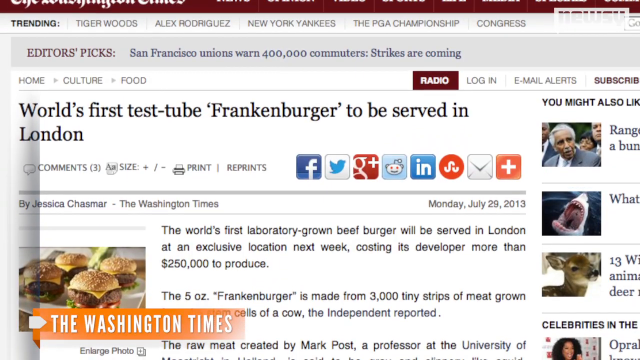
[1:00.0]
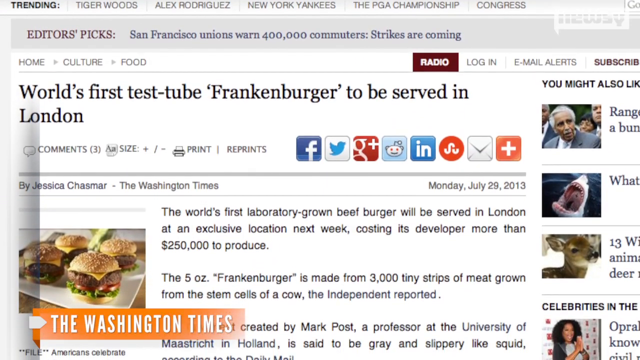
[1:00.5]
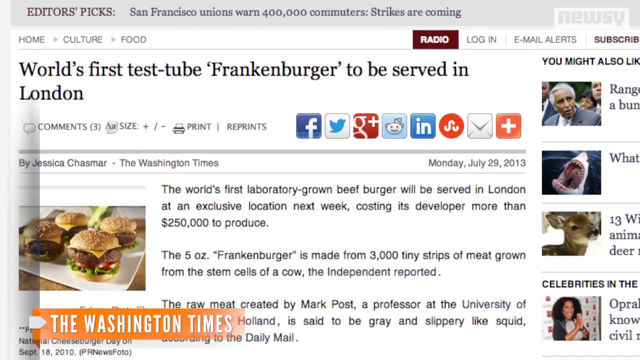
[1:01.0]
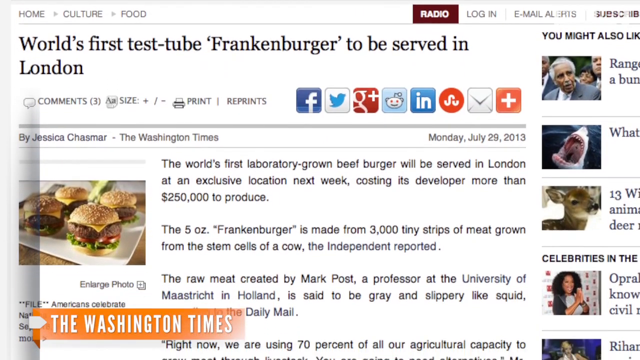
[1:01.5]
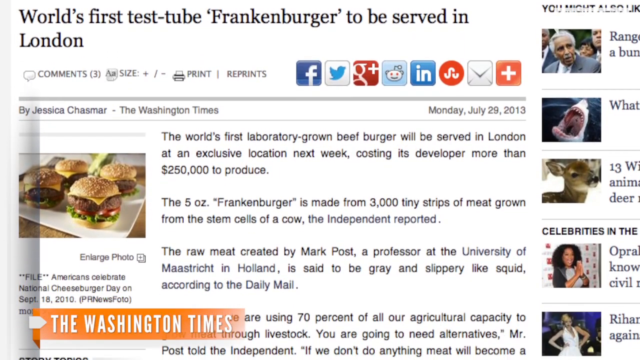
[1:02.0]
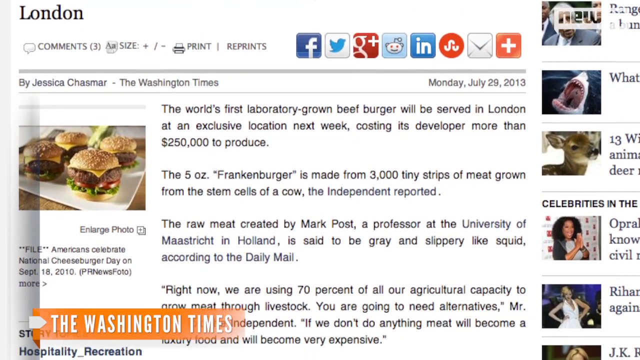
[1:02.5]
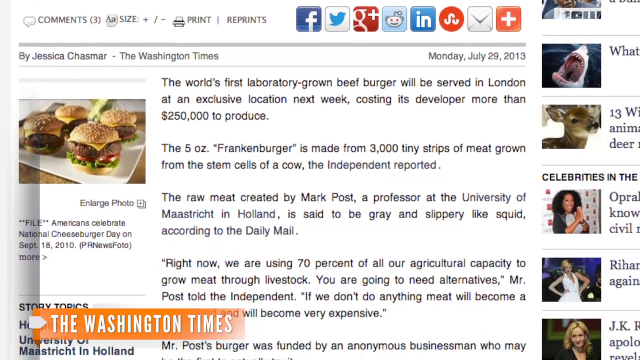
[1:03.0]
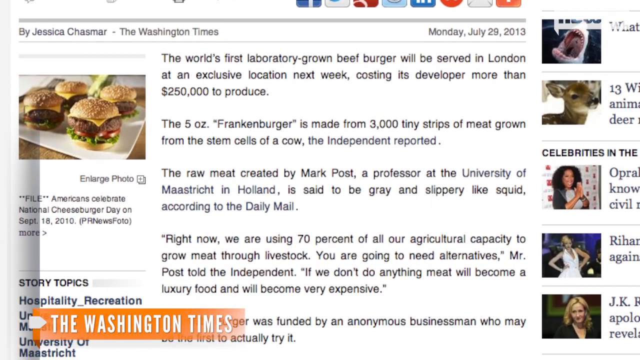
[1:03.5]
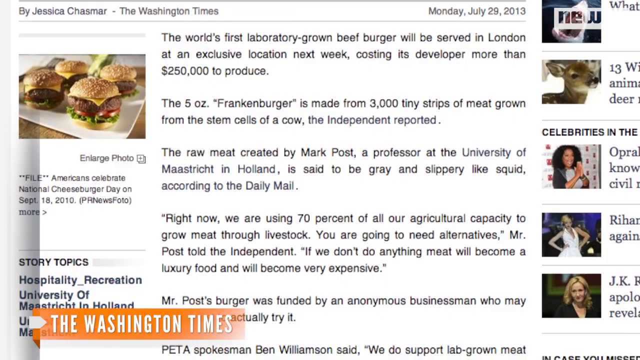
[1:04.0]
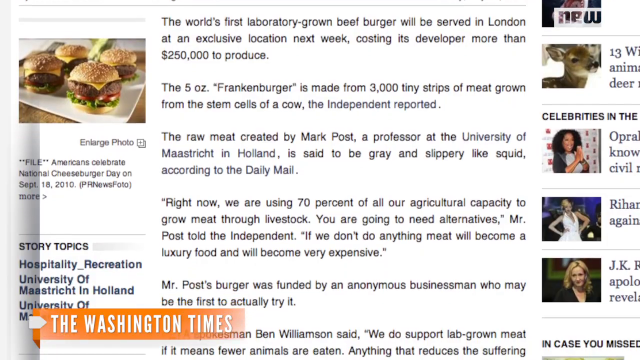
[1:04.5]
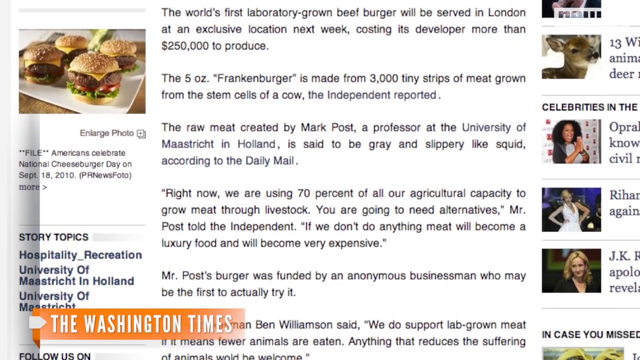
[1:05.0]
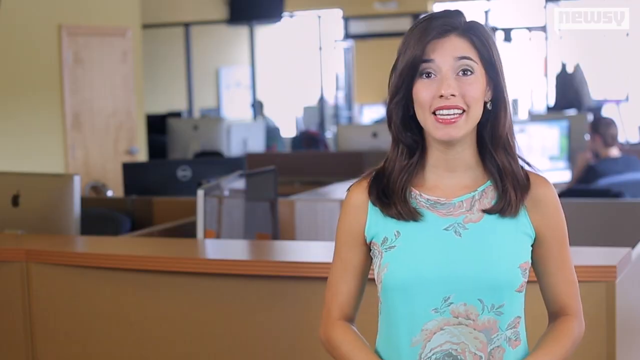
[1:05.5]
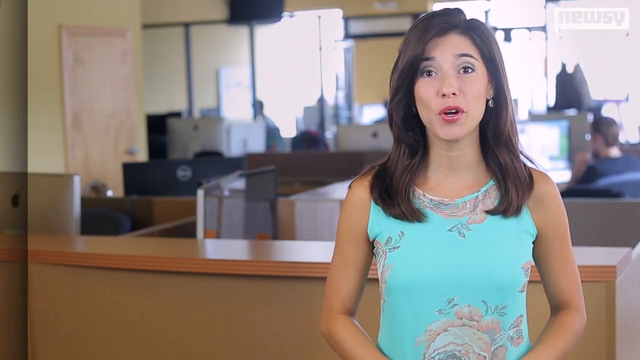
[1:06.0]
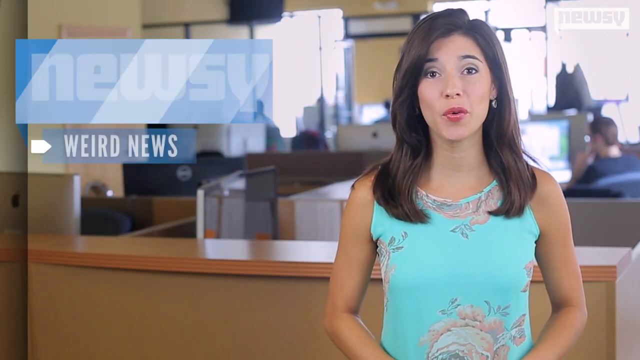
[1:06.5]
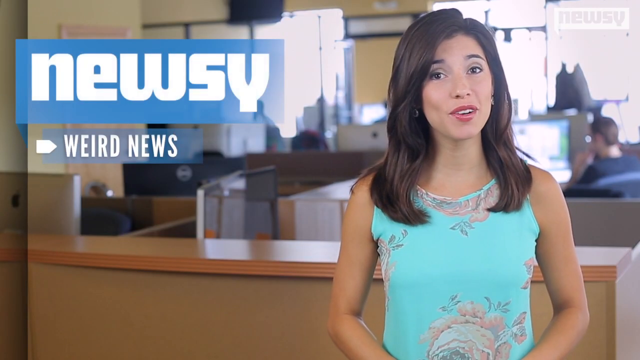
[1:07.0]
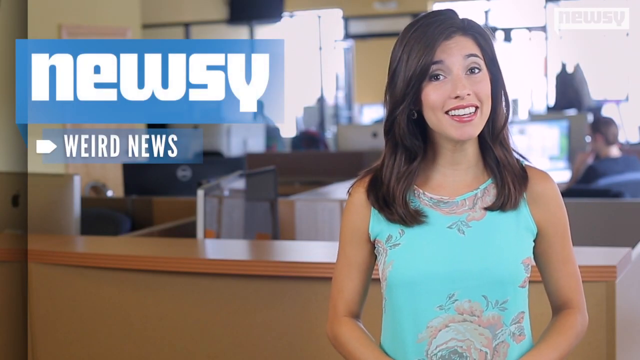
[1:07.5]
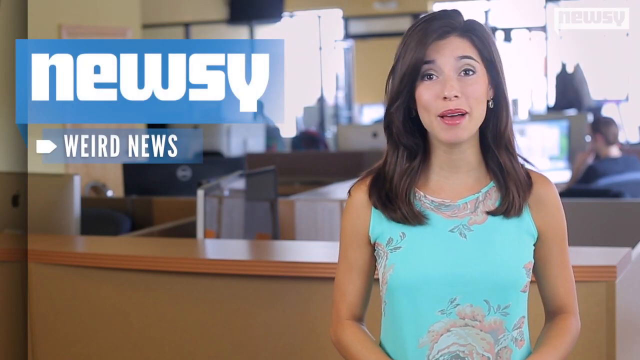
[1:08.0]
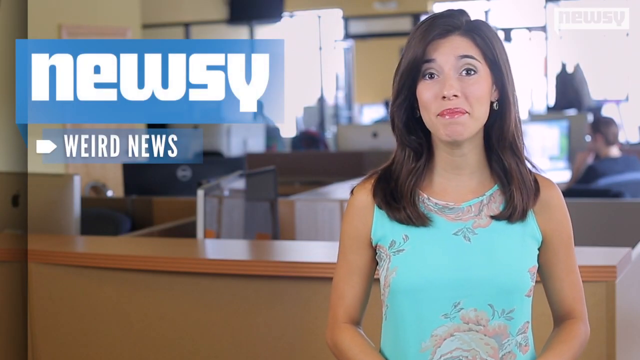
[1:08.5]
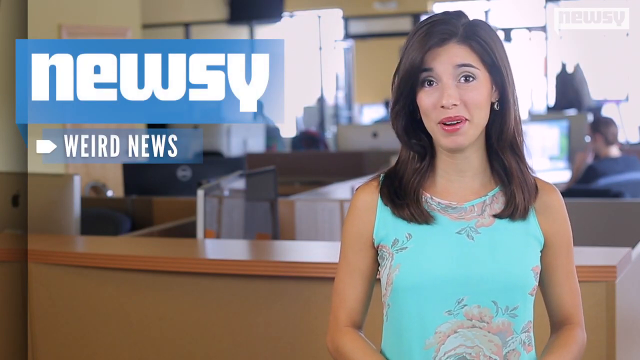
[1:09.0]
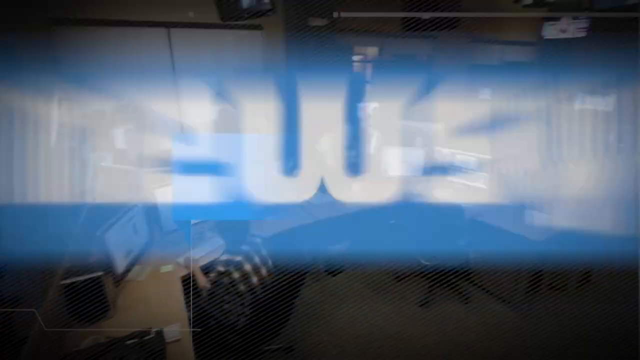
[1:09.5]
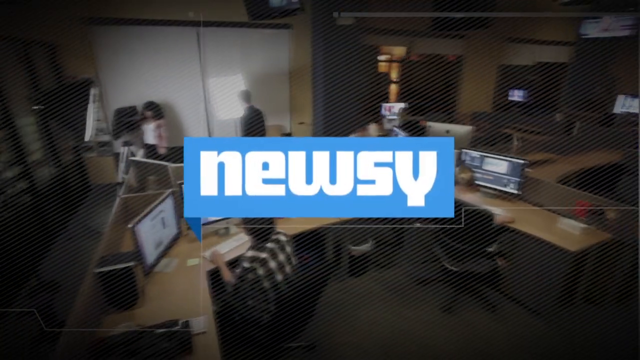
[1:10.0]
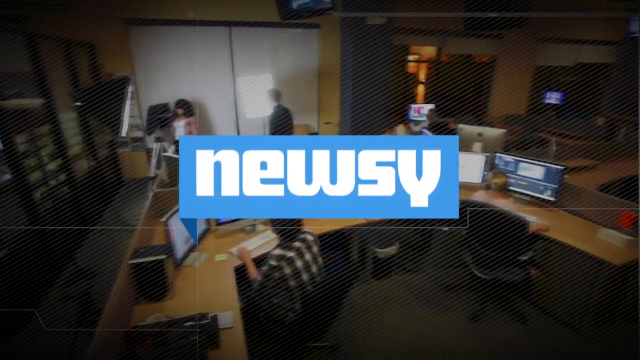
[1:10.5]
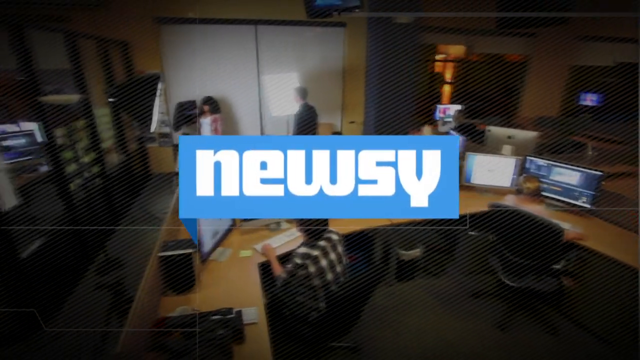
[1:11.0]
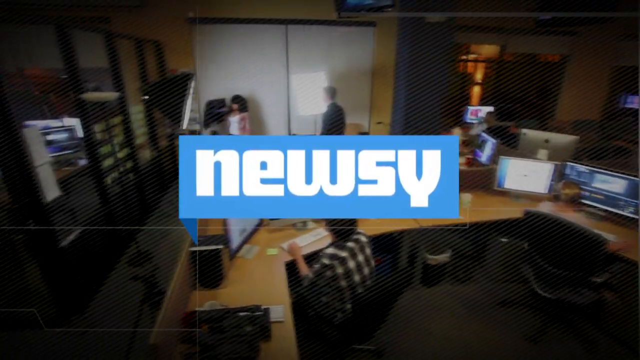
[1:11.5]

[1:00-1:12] A website page is displayed with text reading: "The world's first laboratory-grown beef burger will be served in London at an exclusive location next week, costing its developer more than $250,000 to produce. The 5-ounce Frankenberger is made from 3,000 tiny strips of meat grown from the stem cells of a cow, The Independent reported." The presenter is visible again on the Newsy program, with "weird news" written on screen.